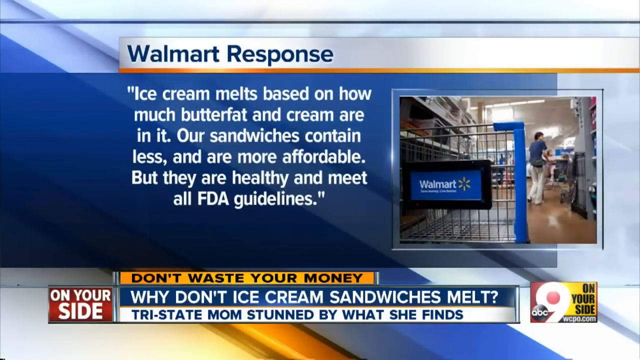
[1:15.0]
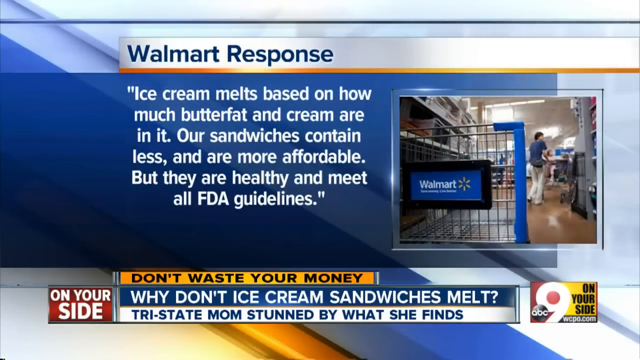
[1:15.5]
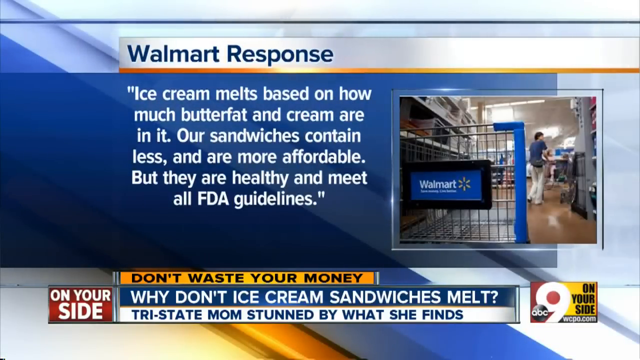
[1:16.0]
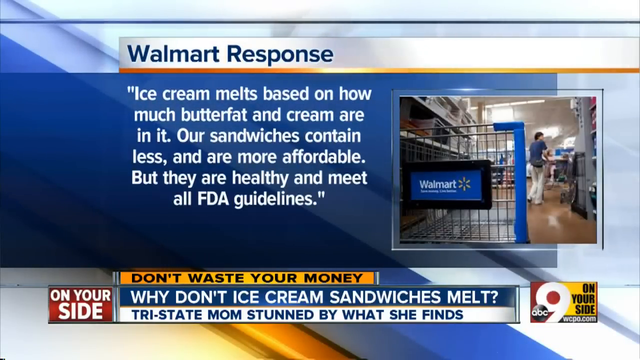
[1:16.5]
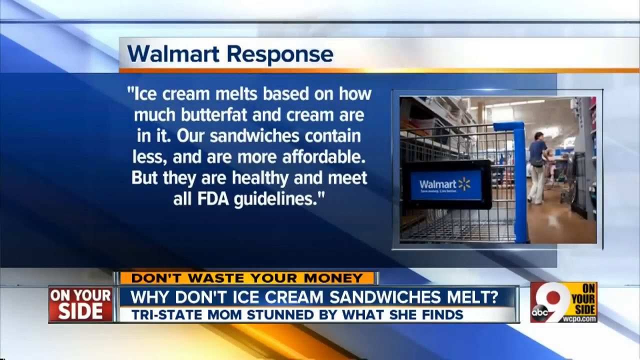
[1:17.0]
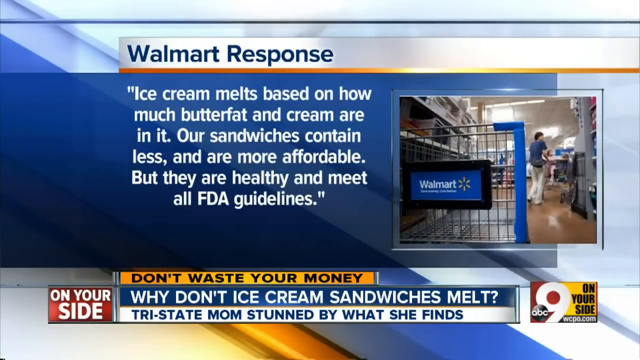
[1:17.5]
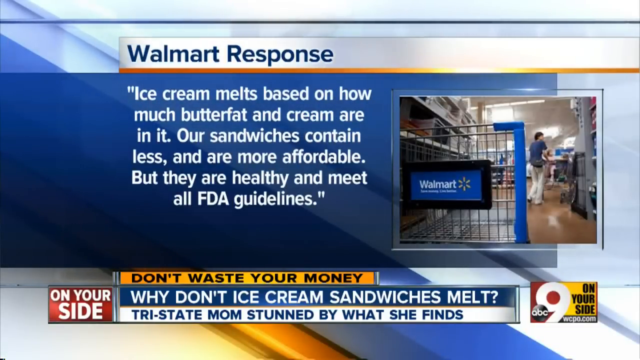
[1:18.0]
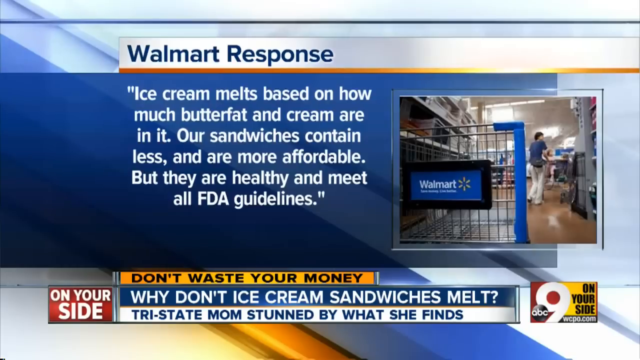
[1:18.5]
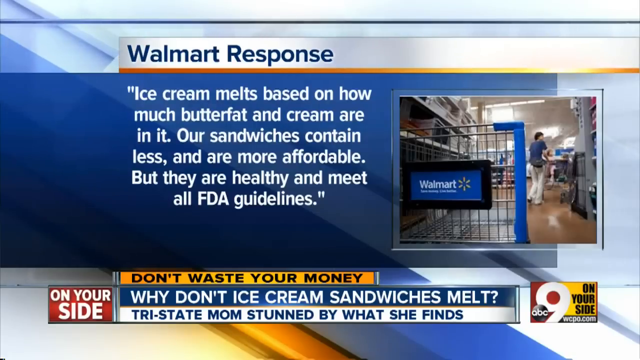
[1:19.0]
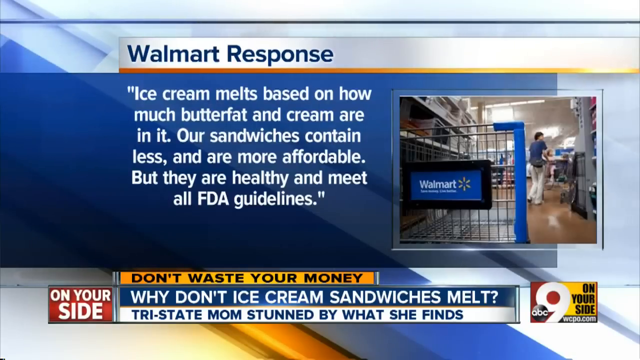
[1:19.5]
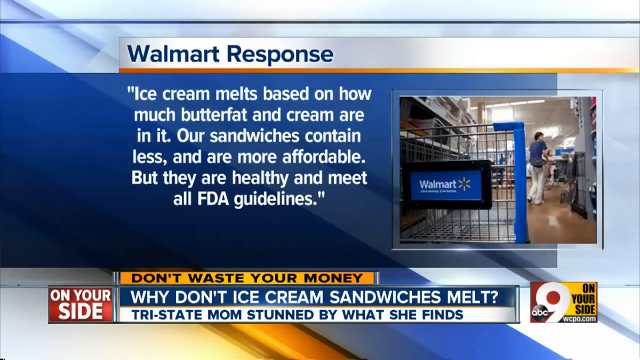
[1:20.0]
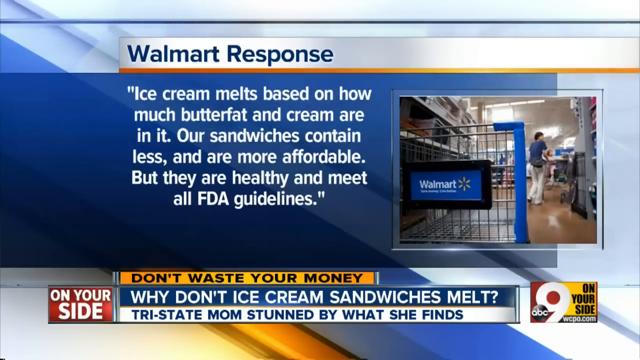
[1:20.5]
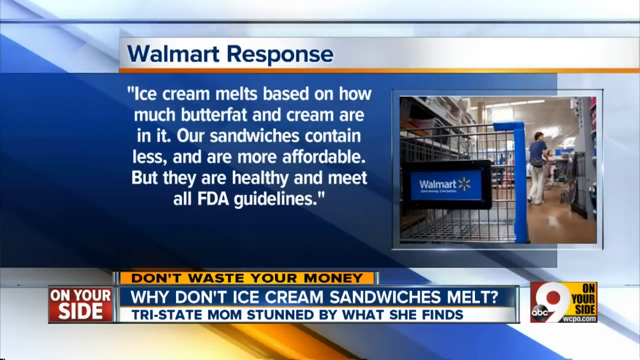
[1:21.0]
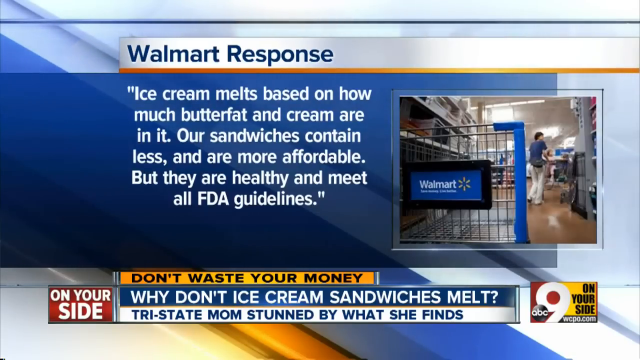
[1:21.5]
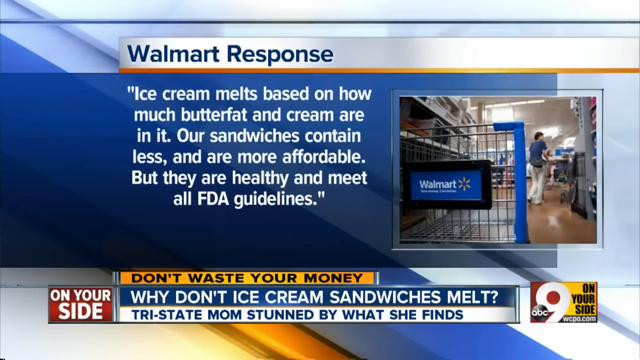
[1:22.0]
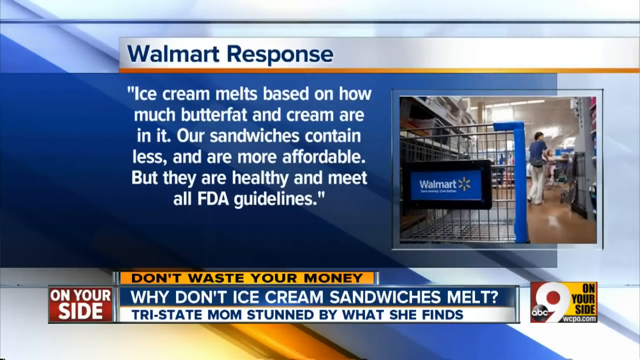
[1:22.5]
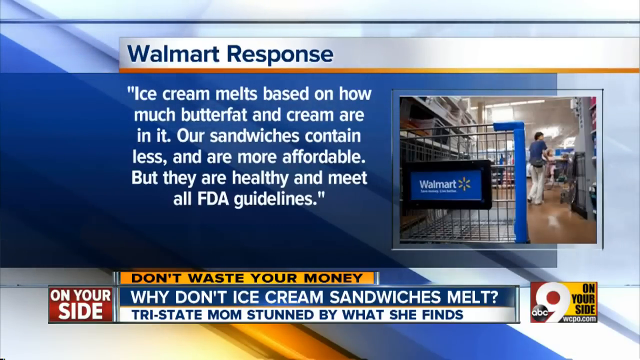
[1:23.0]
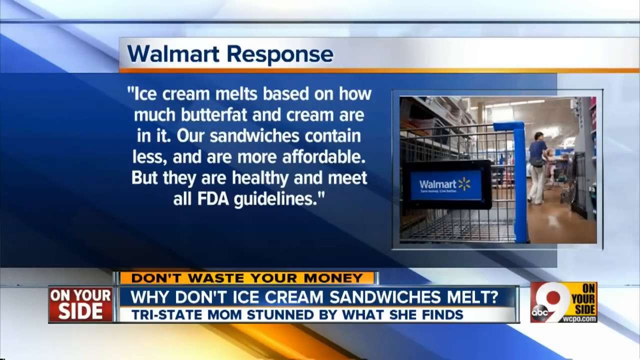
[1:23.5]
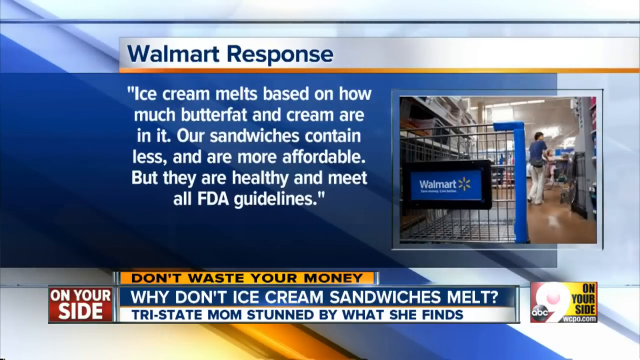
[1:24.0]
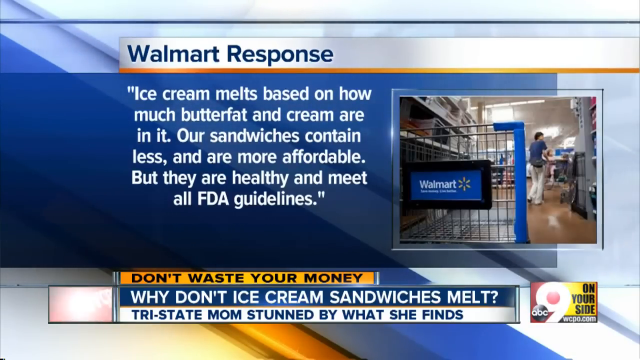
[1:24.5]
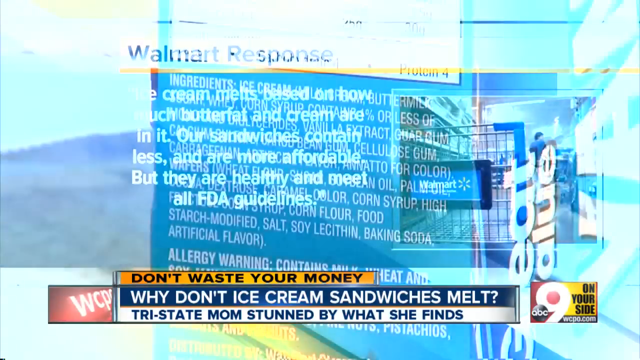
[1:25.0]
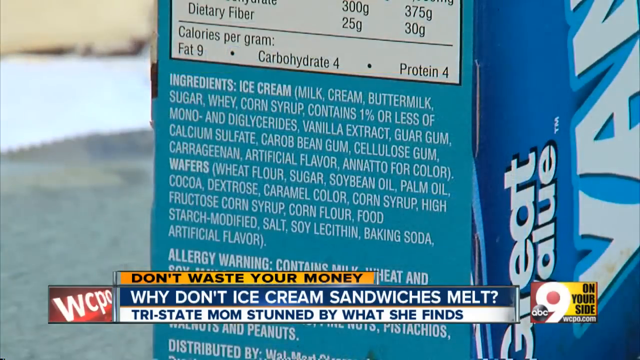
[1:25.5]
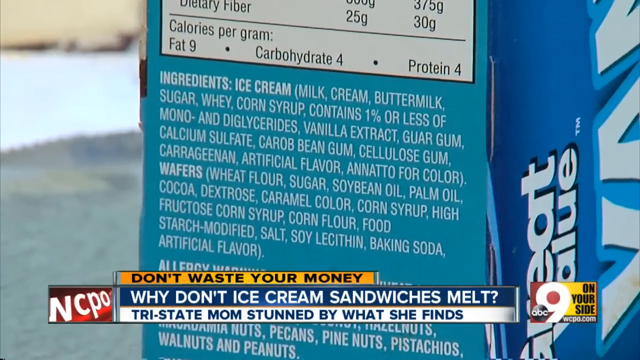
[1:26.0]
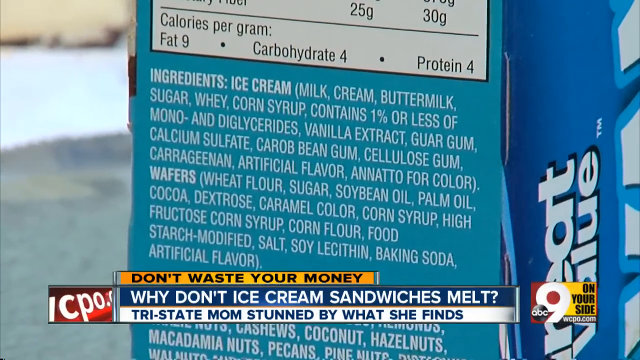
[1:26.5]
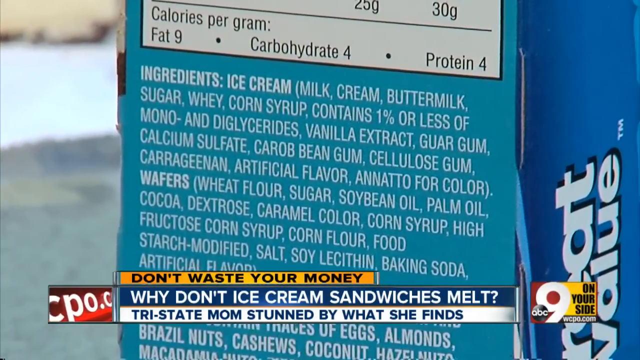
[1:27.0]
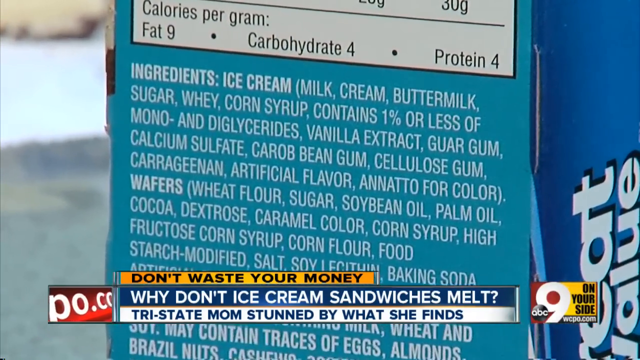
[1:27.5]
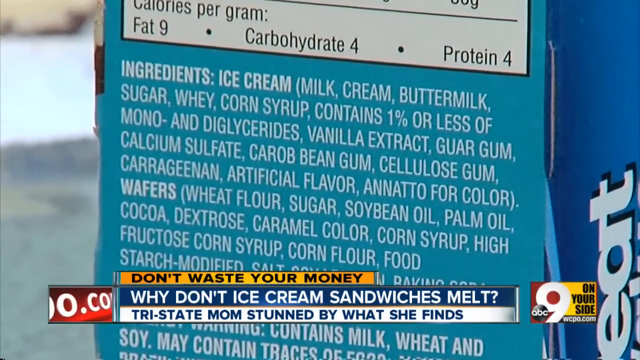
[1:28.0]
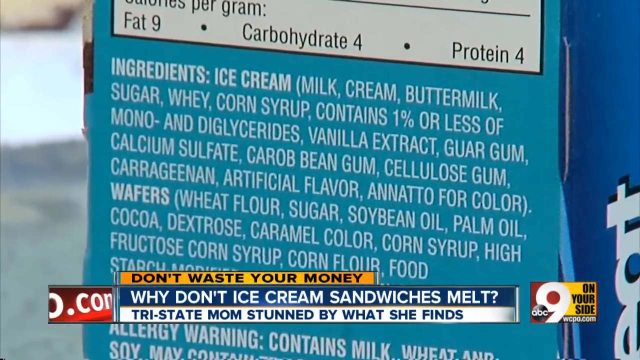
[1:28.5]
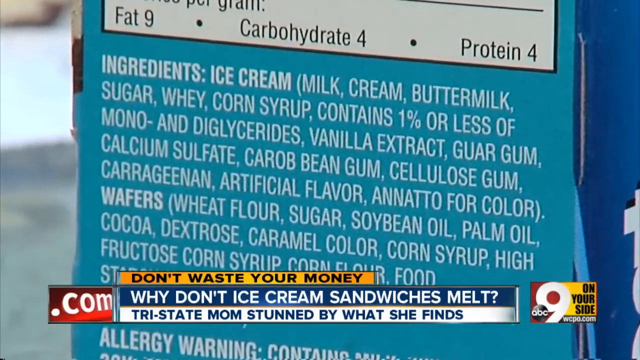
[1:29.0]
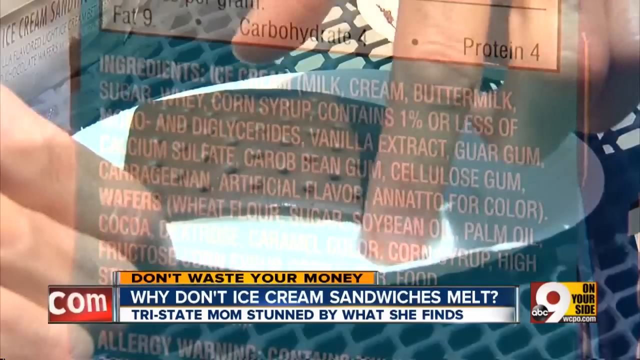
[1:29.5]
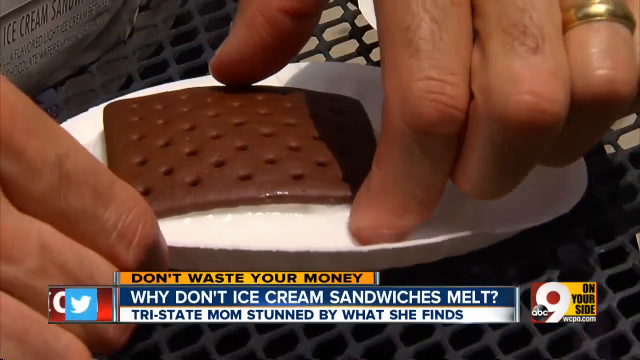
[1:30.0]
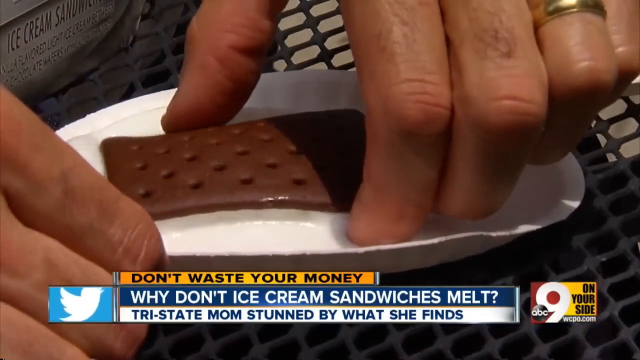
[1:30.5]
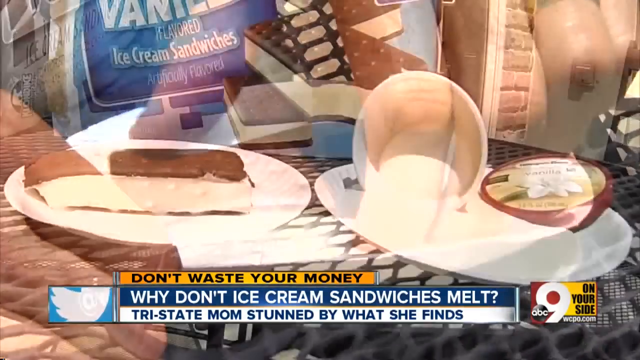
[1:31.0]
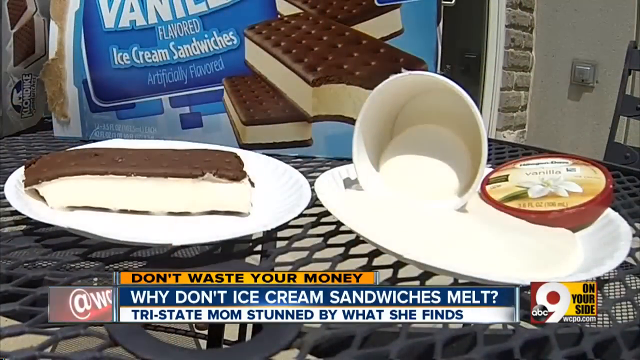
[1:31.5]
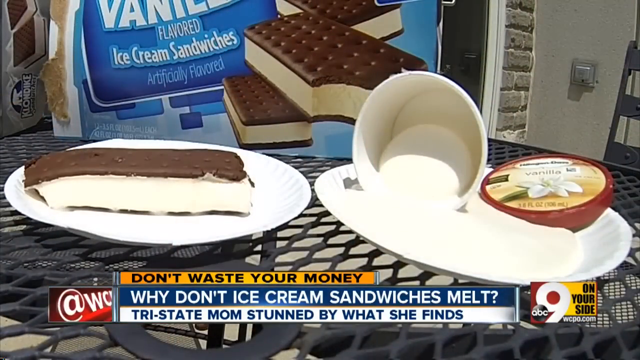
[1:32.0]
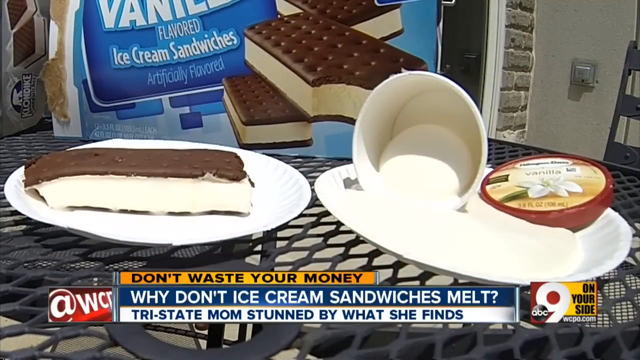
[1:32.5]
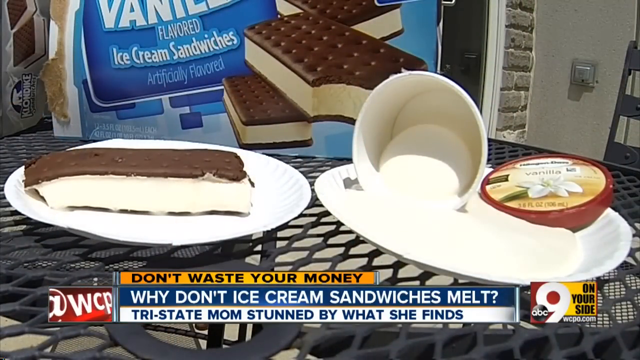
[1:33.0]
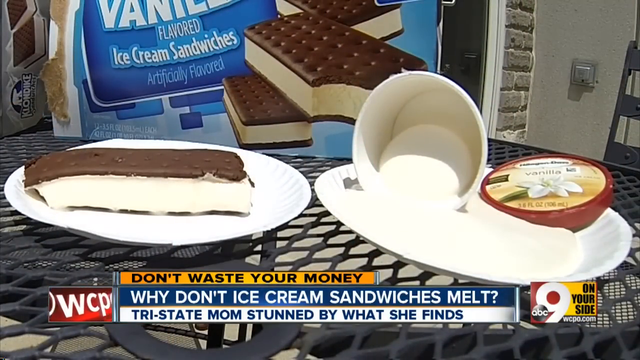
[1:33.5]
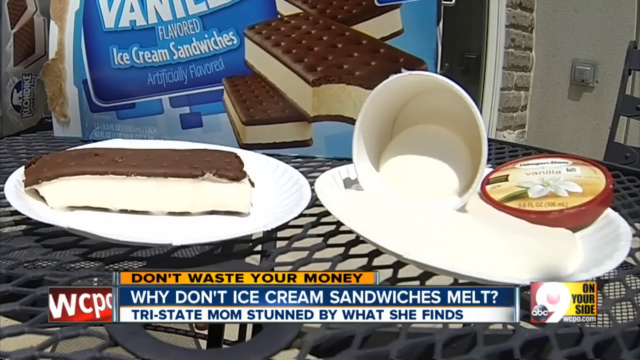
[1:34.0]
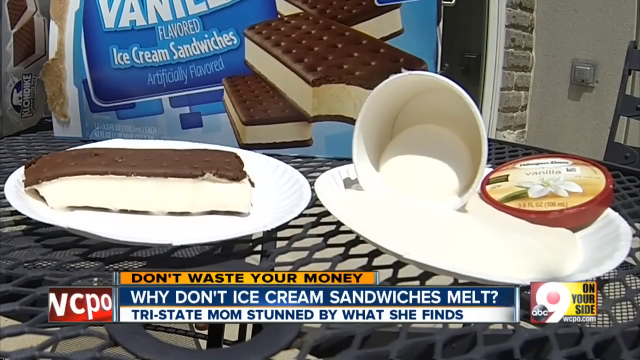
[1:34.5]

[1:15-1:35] A blue screen has a white bar reading "Wal-Mart's response." Below it, a blue square contains white text: "ice cream melts based on how much butter, fat, and cream are in it. Our sandwiches contain less and are more affordable, but they are healthy and meet all FDA guidelines." A graphic at the bottom reads "don't waste your money, why don't ice cream sandwiches melt, tri-state moms stunned by what she finds." The video then zooms in on the ingredients on one of the boxes of ice cream sandwiches on a picnic table; the text is hard to read. A picnic table is shown with melting ice cream, while the ice cream sandwiches are not melting at all. The same bottom graphic remains.